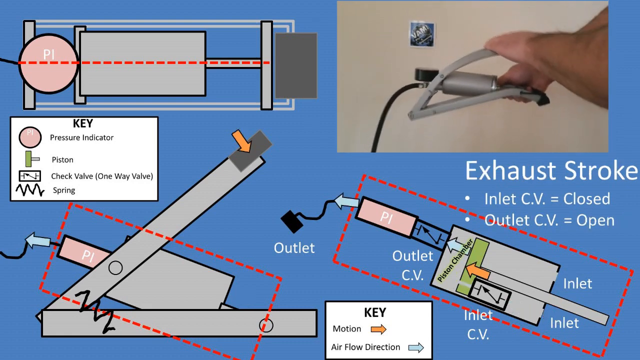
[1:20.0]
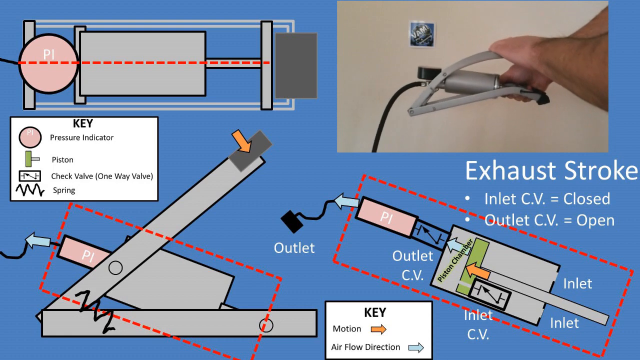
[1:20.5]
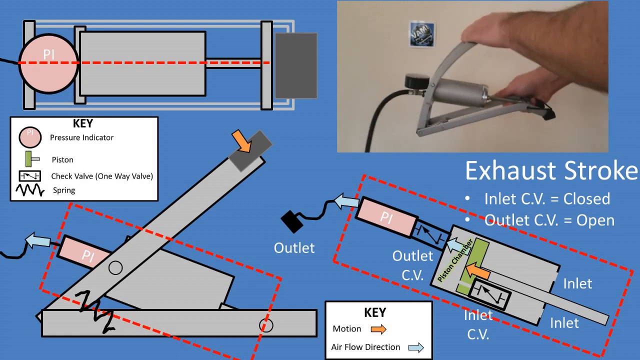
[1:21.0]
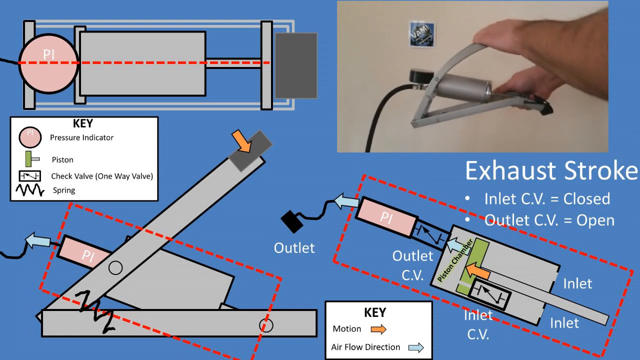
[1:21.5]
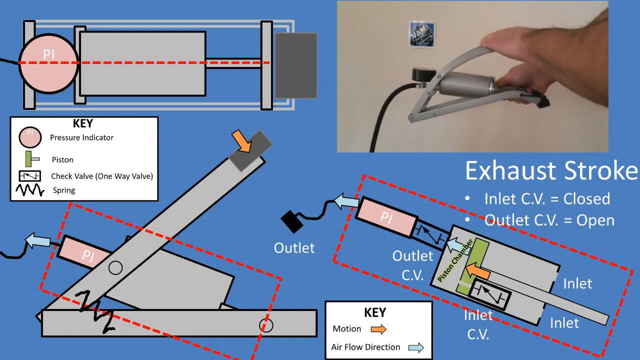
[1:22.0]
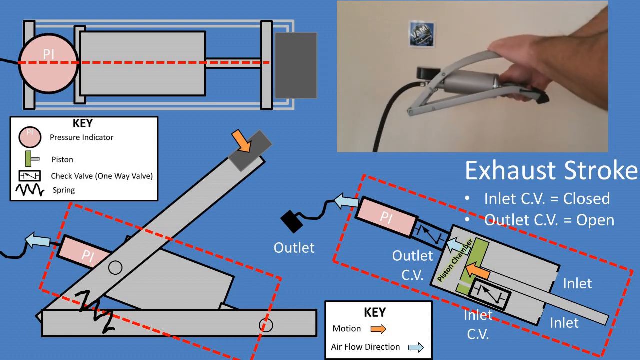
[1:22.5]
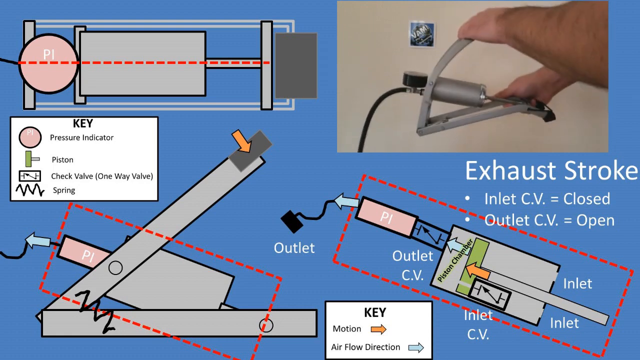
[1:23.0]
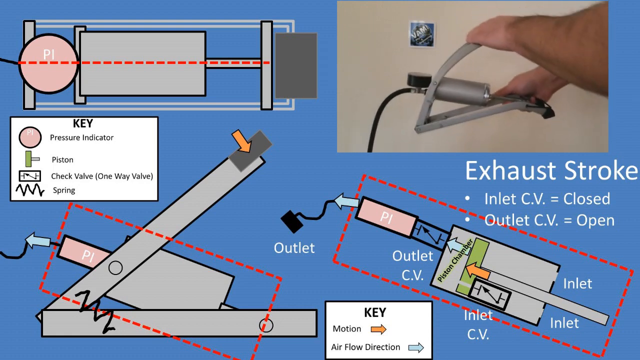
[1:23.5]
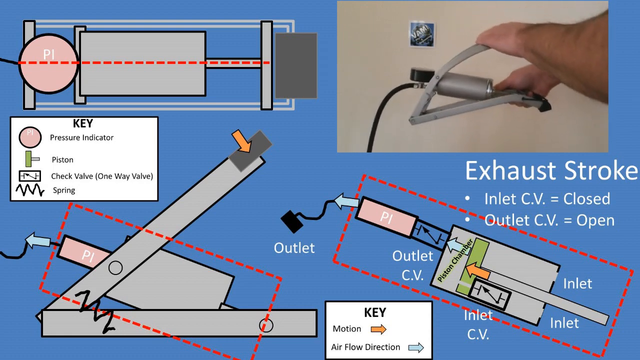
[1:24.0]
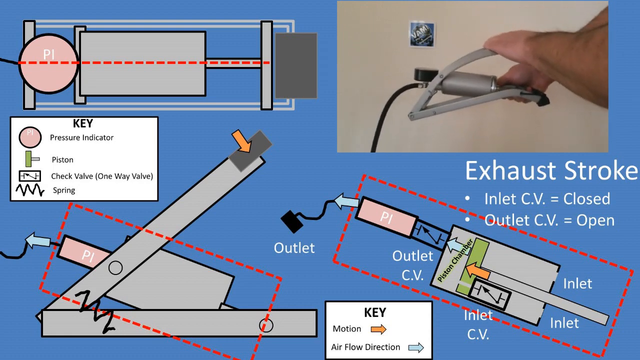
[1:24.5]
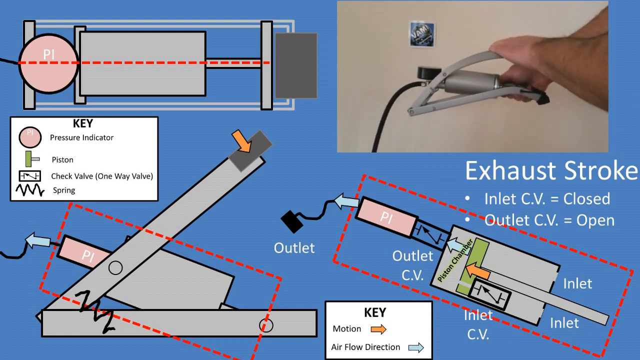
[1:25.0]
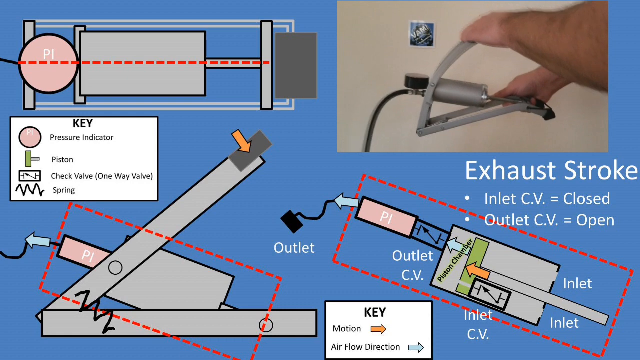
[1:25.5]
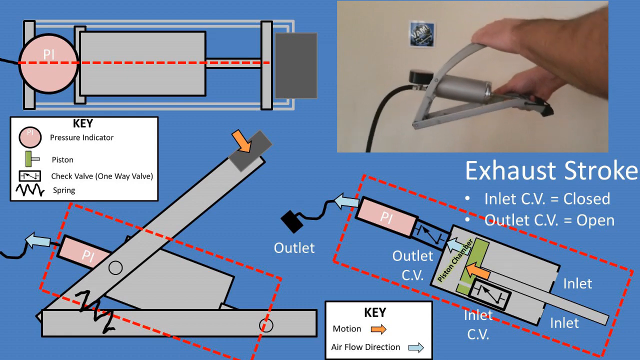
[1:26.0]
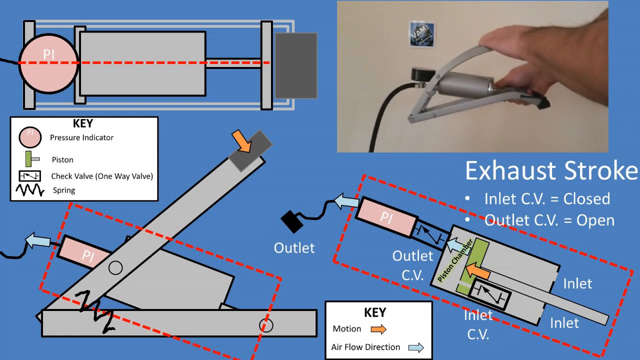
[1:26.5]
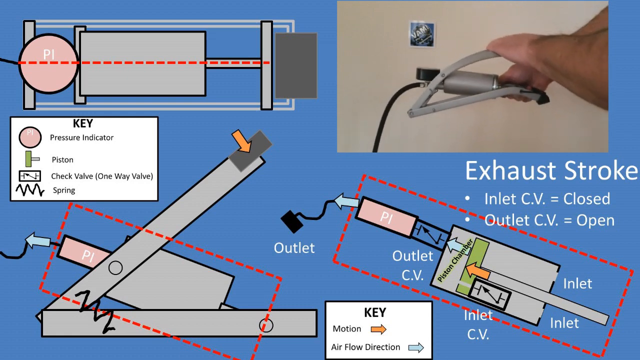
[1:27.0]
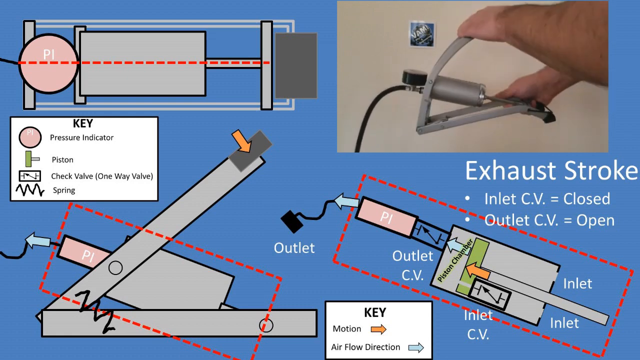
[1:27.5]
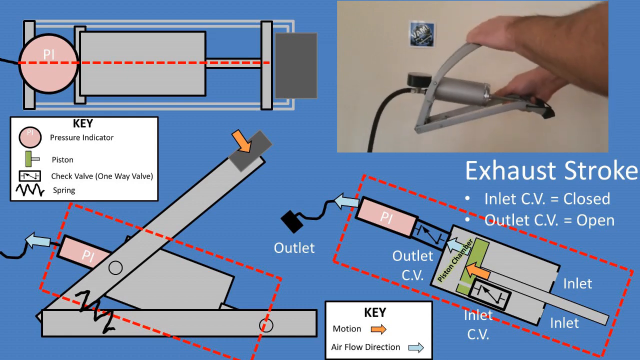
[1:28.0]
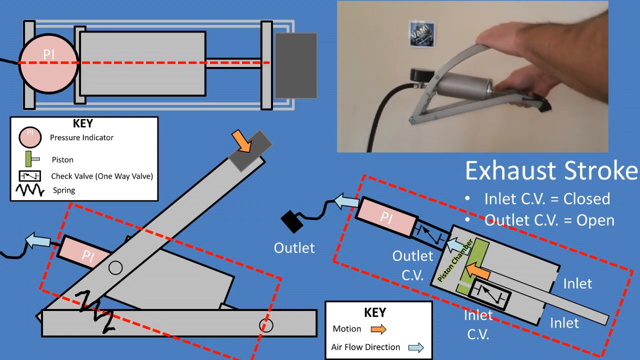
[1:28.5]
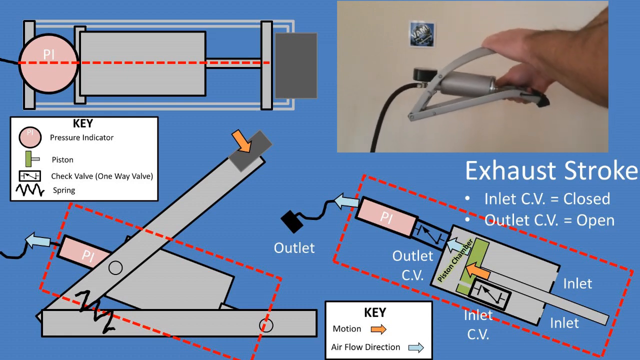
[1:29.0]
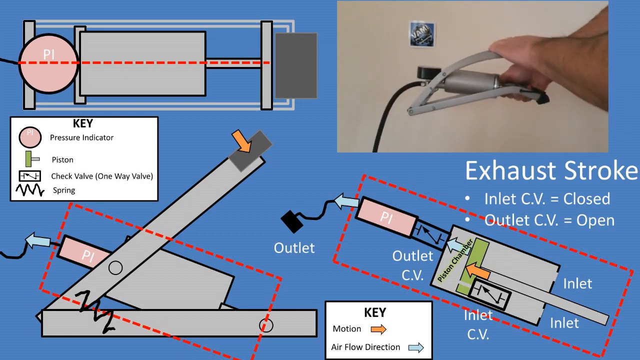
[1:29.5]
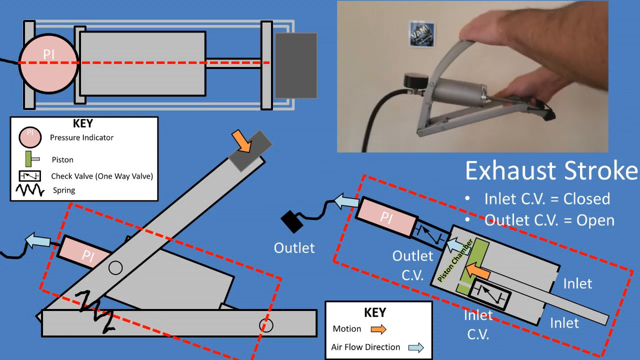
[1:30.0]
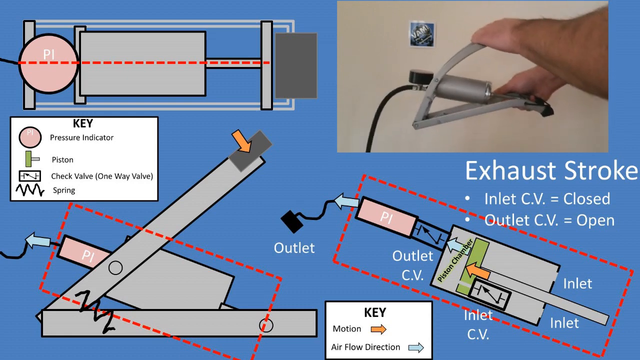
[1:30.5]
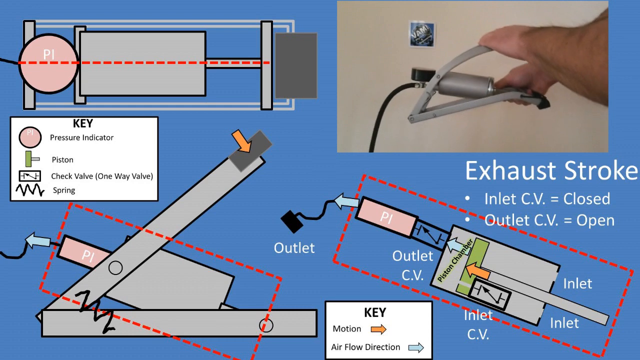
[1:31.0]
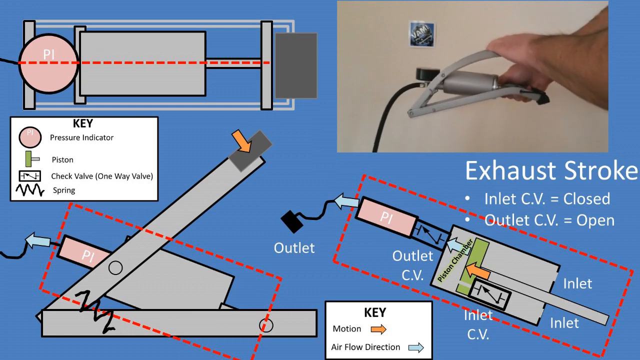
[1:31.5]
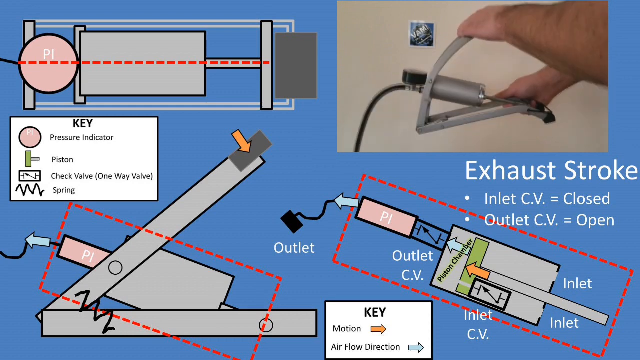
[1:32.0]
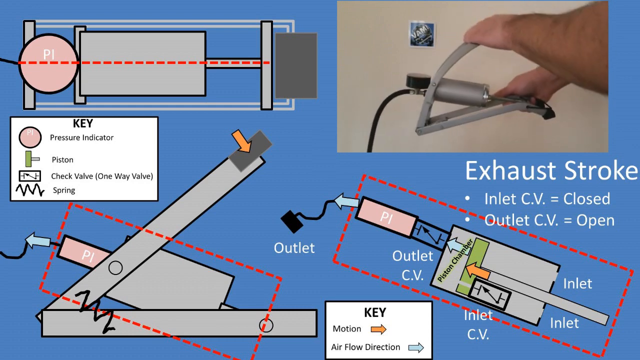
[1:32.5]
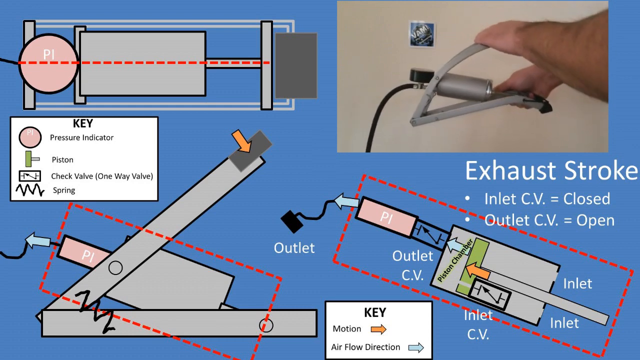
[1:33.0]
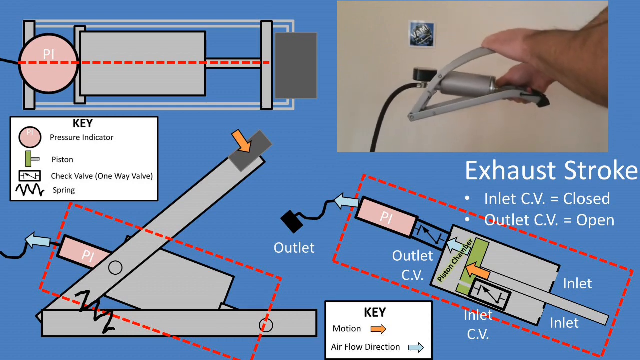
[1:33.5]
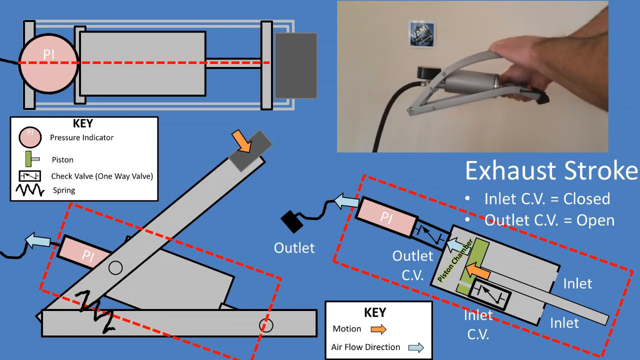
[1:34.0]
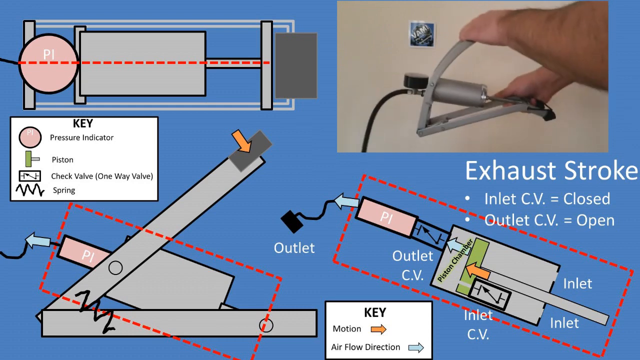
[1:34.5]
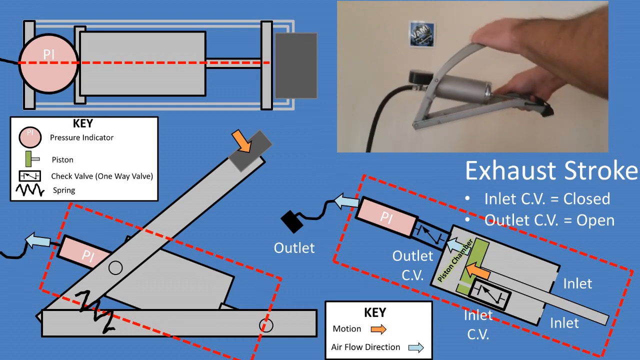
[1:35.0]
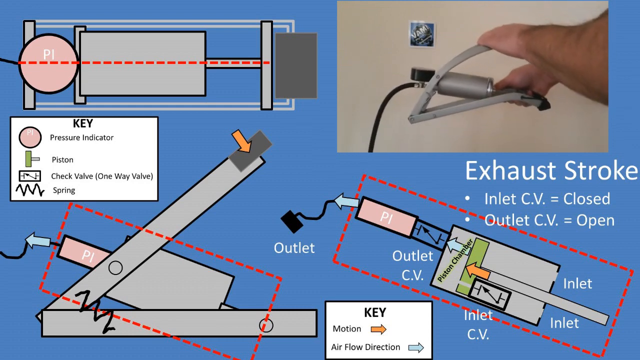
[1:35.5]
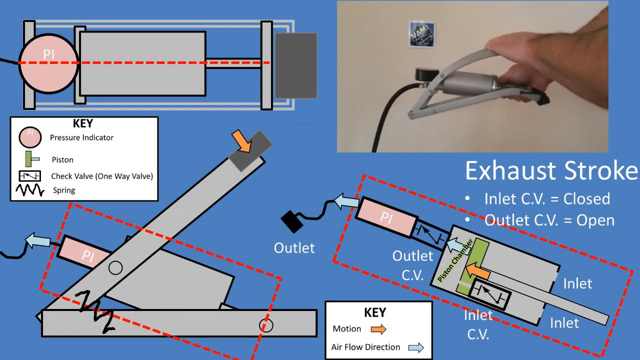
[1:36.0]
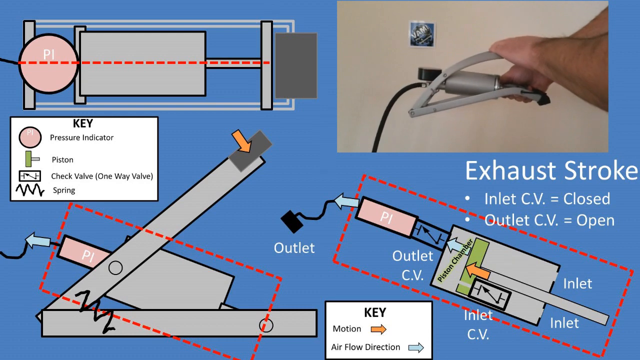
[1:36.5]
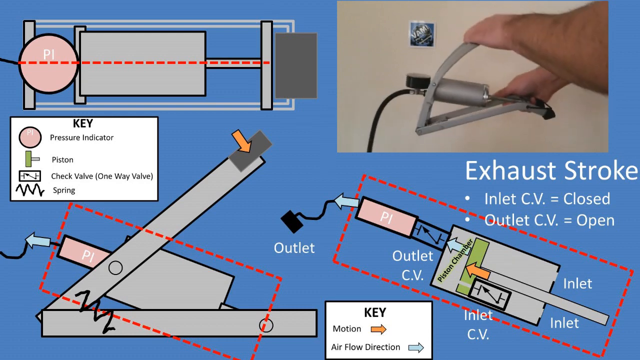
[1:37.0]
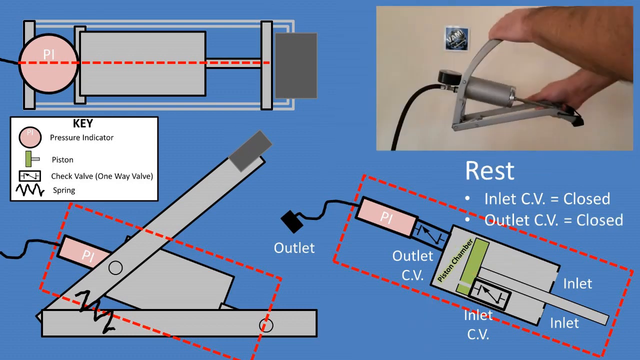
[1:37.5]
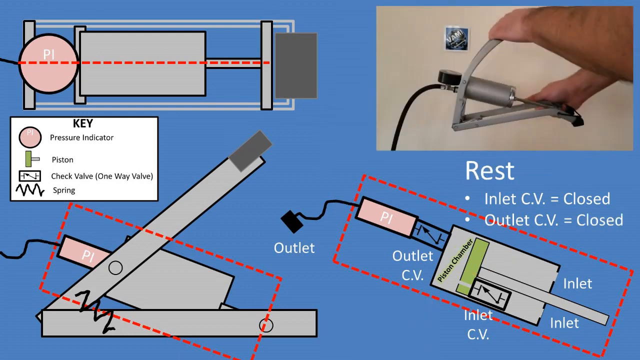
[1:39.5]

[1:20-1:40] The video in the upper right of the screen continues, the same video as before now repeating over and over, showing the person moving the two levers back and forth, which moves the piston within the main part of the device. The person's forearms and hands grasp the top piece and push it down to meet the lower gray piece, creating the piston movement described in the diagrams. The diagrams are unchanged except for the lower left diagram, which now has an orange arrow at the far upper right point of the upper linear portion, pointing to the lower right, and a blue arrow pointing to the left just past the pink part labeled pressure indicator. According to the key, this indicates airflow going to the left and motion pushing down on the device's levers.